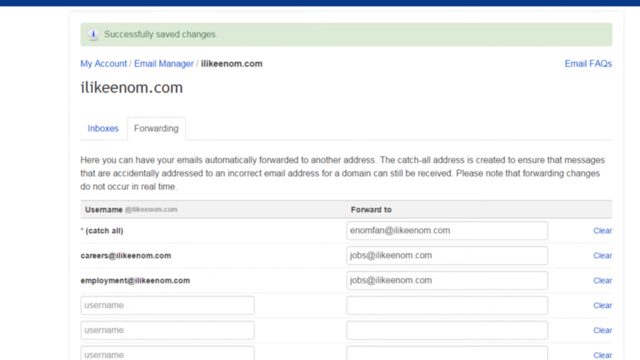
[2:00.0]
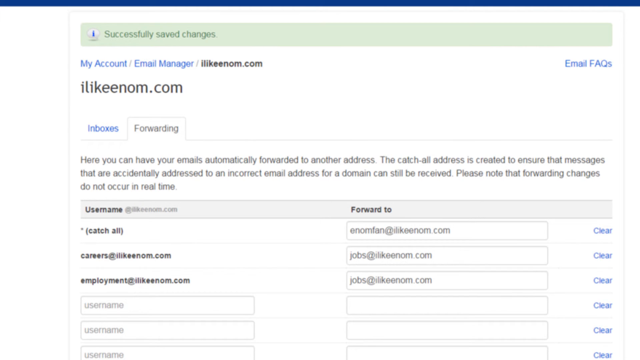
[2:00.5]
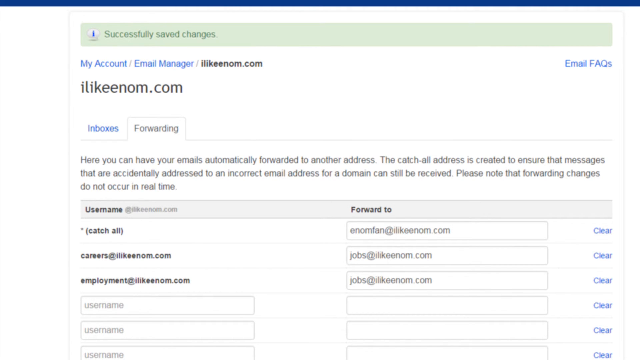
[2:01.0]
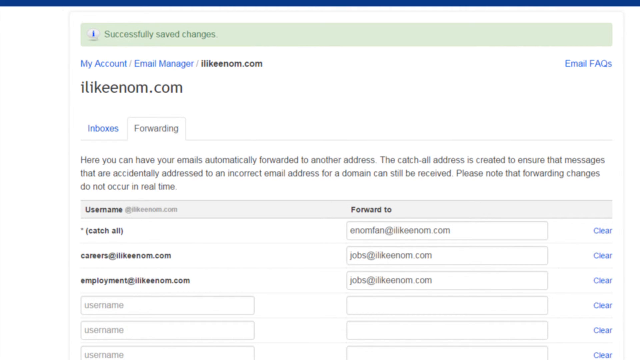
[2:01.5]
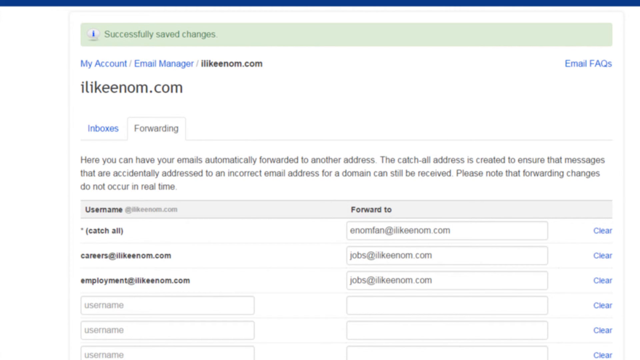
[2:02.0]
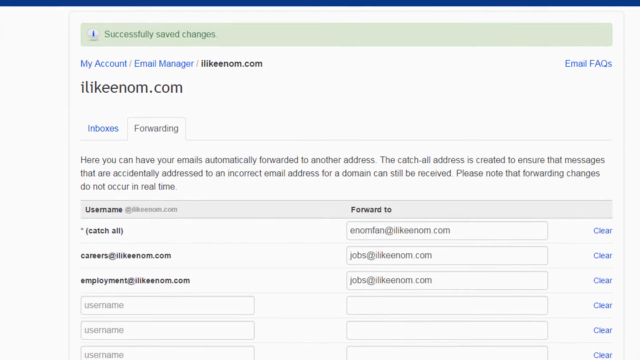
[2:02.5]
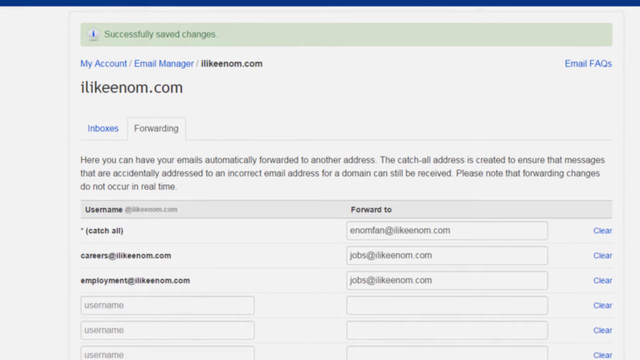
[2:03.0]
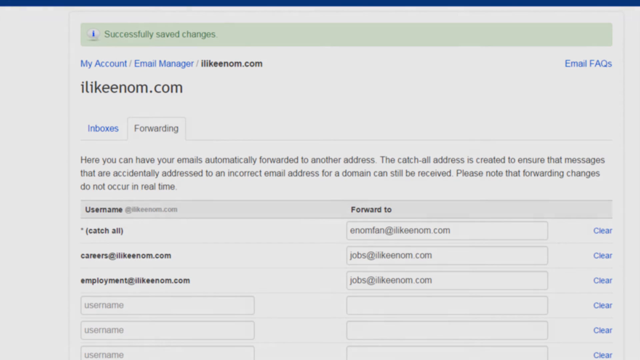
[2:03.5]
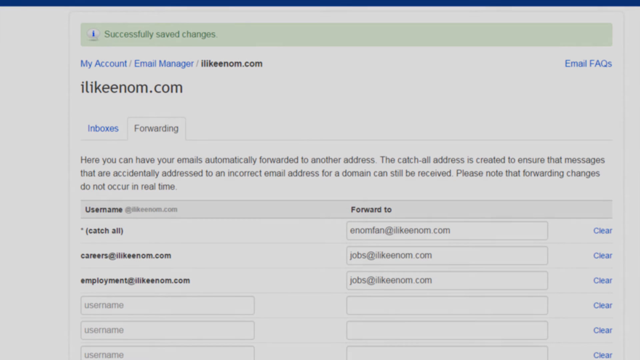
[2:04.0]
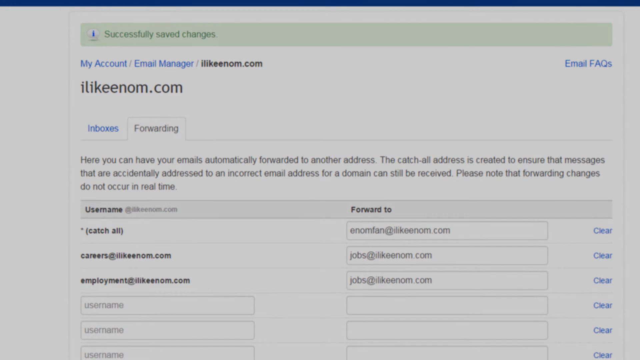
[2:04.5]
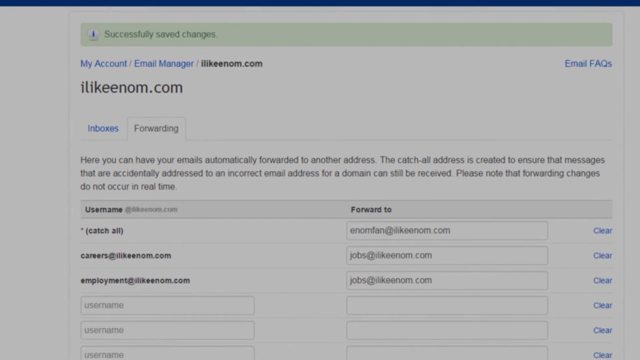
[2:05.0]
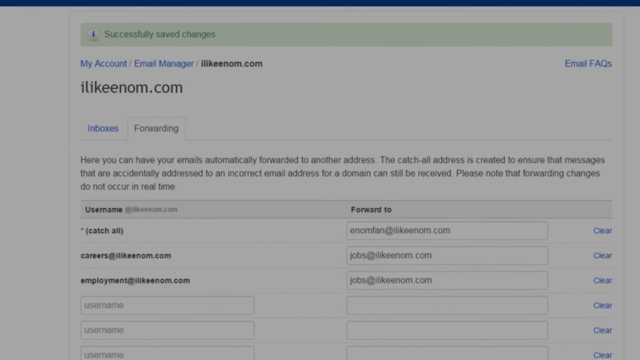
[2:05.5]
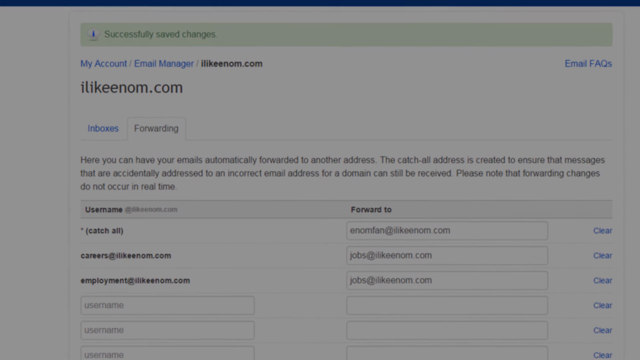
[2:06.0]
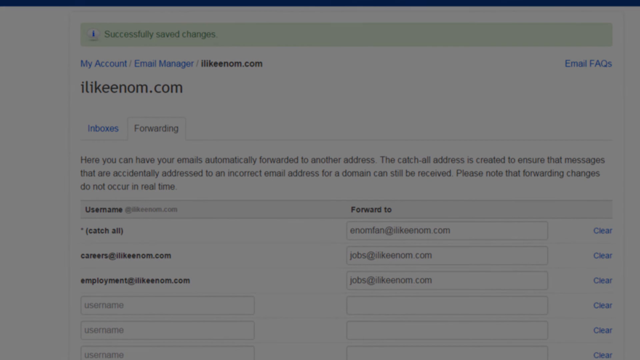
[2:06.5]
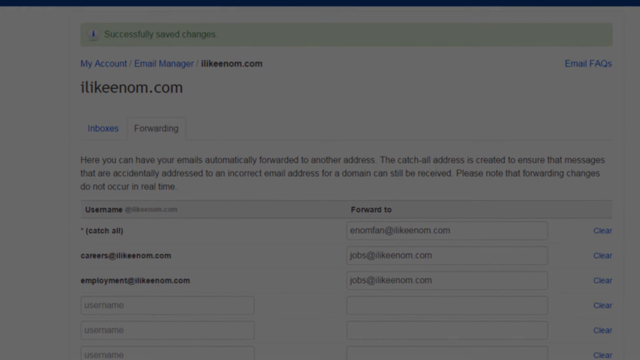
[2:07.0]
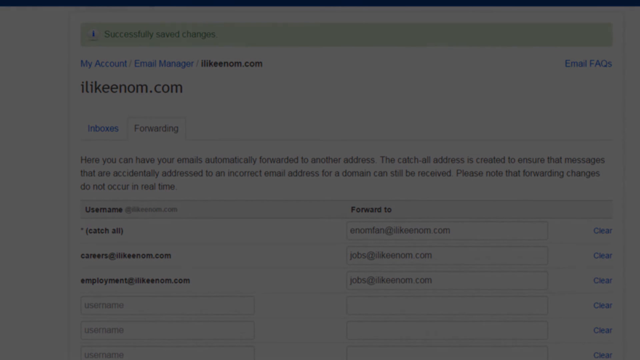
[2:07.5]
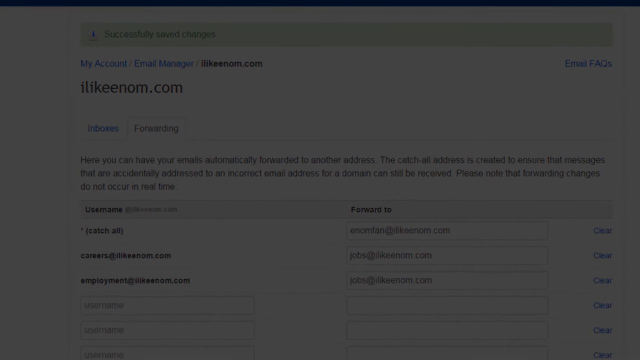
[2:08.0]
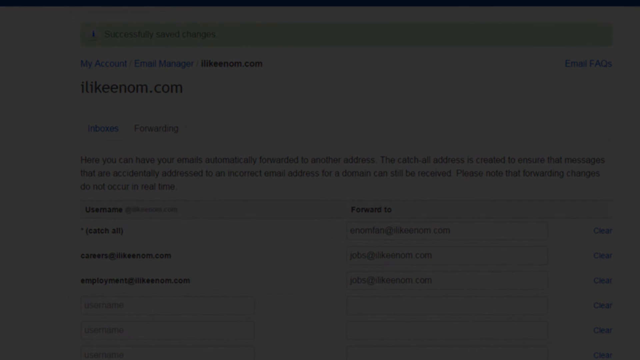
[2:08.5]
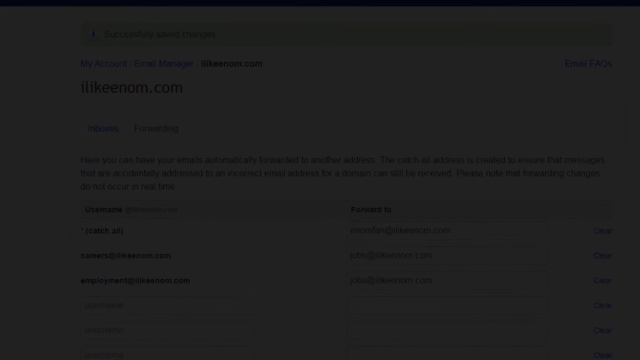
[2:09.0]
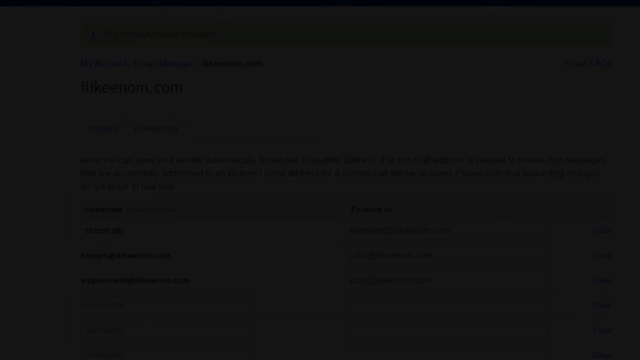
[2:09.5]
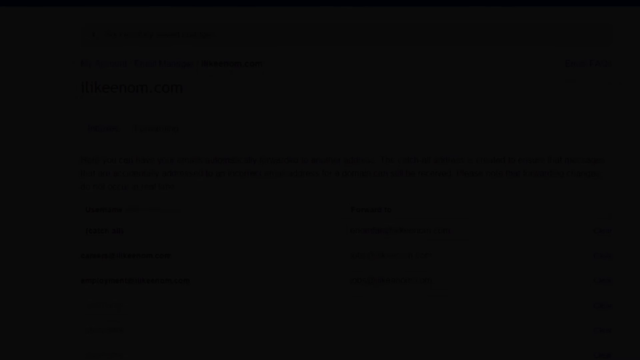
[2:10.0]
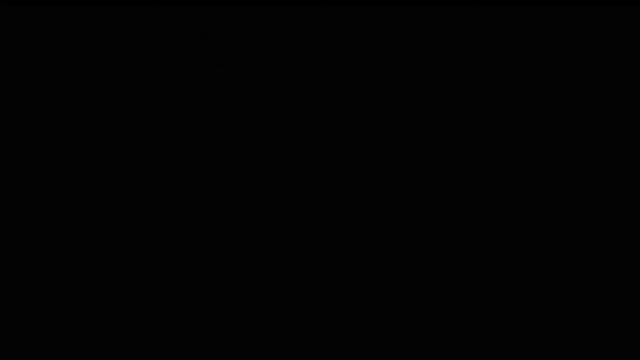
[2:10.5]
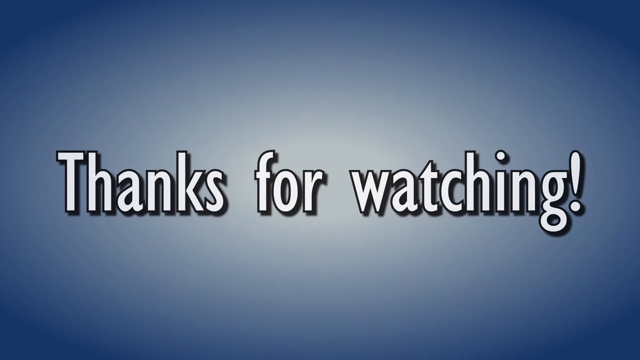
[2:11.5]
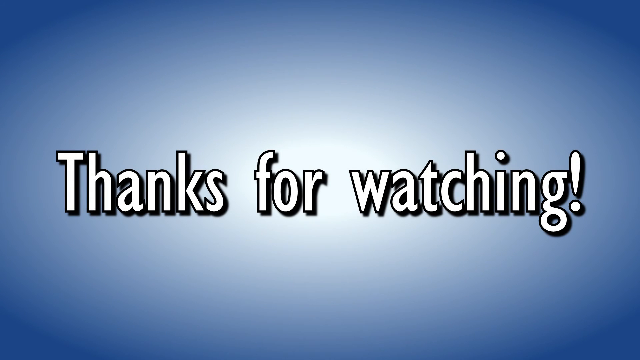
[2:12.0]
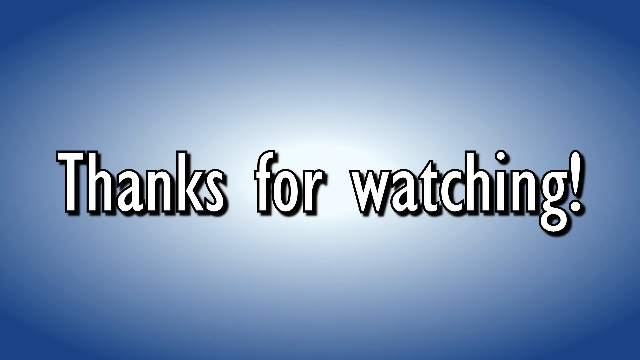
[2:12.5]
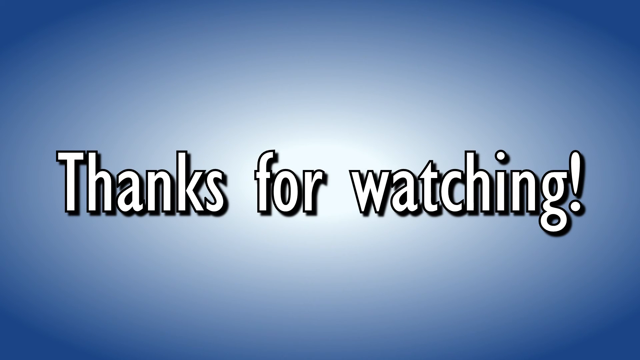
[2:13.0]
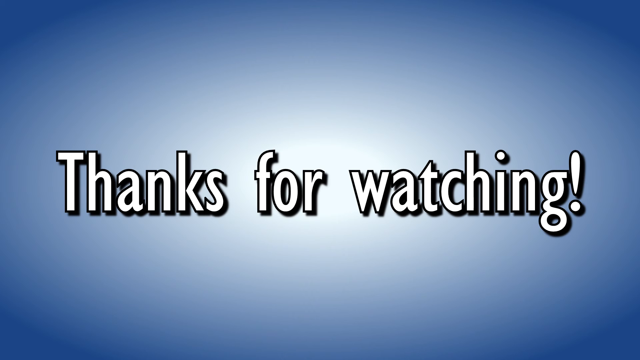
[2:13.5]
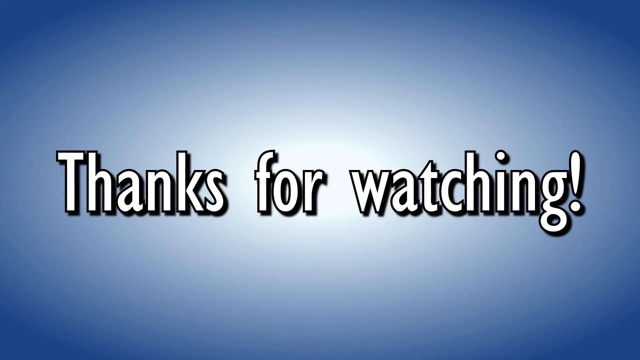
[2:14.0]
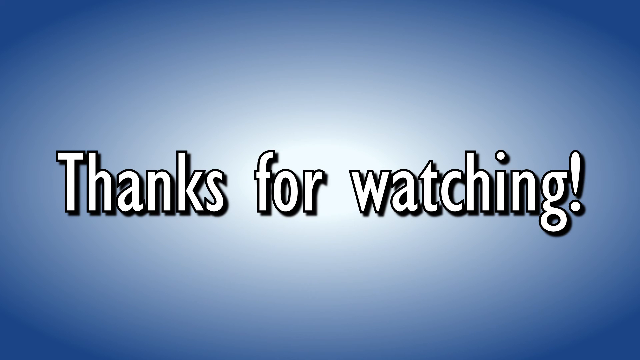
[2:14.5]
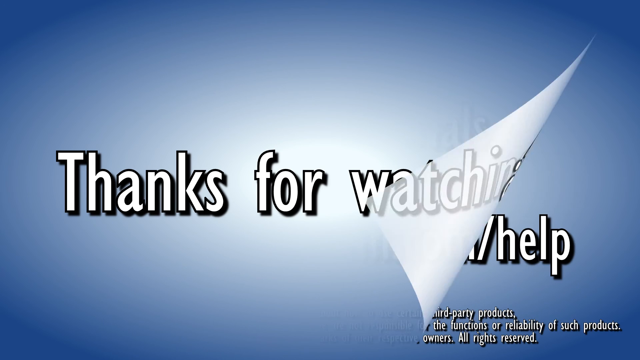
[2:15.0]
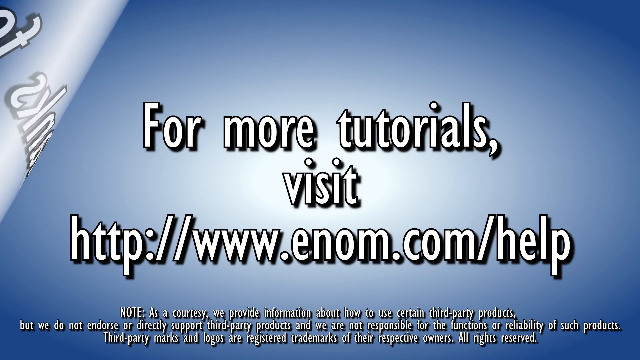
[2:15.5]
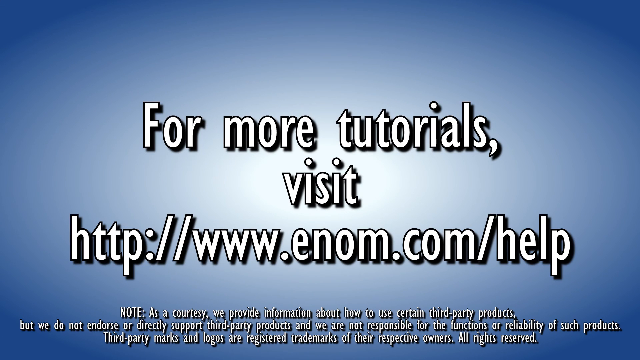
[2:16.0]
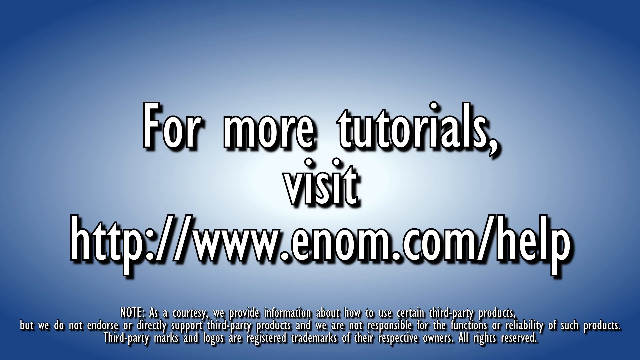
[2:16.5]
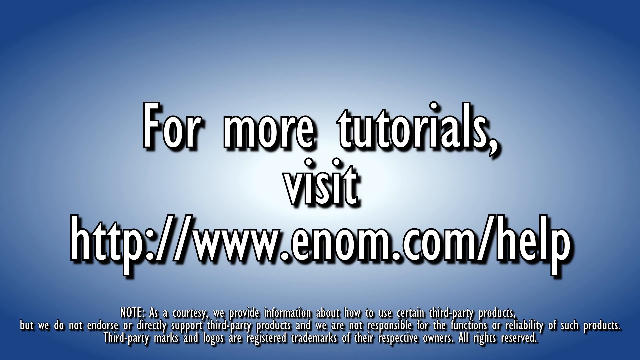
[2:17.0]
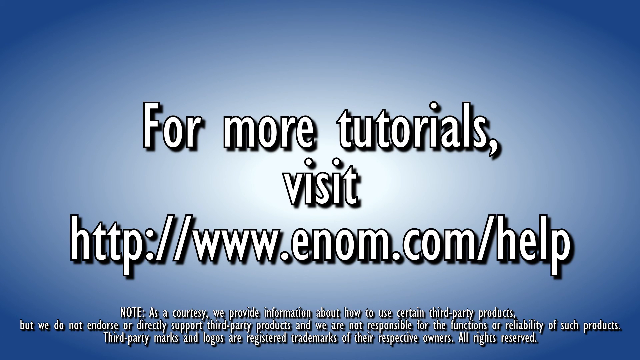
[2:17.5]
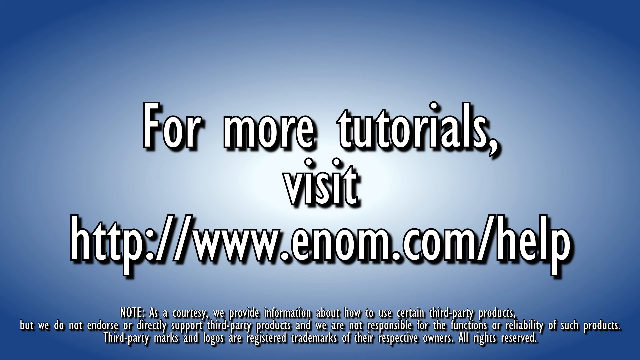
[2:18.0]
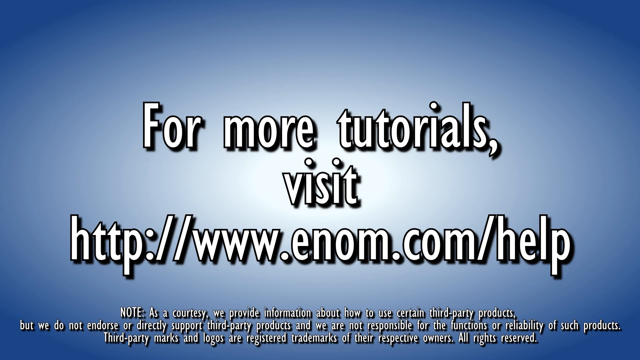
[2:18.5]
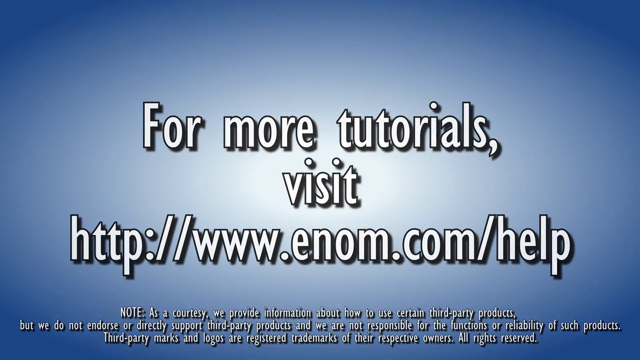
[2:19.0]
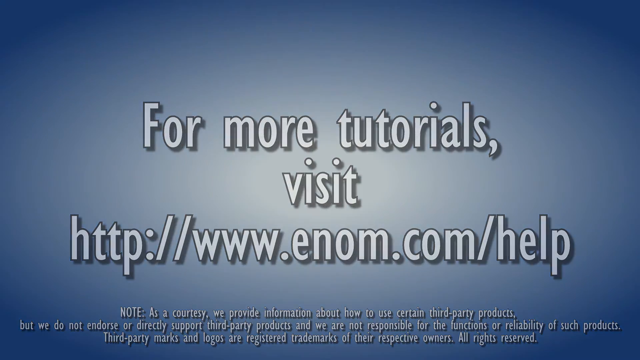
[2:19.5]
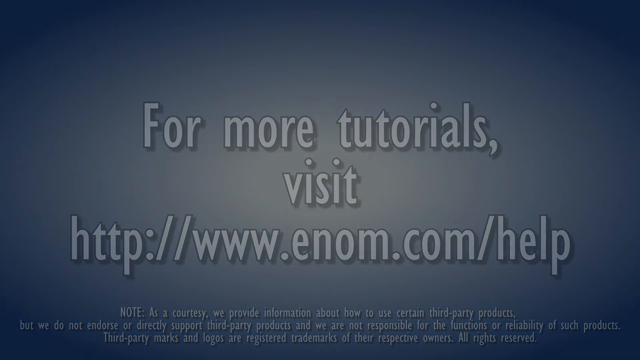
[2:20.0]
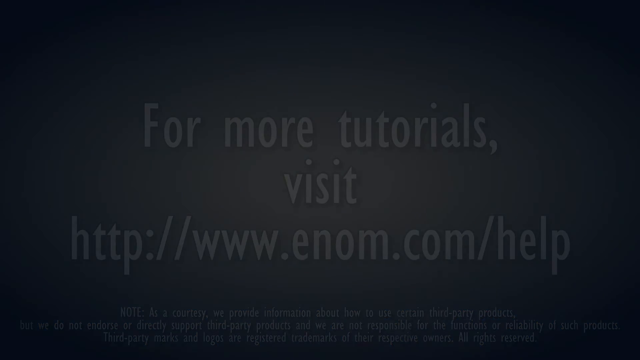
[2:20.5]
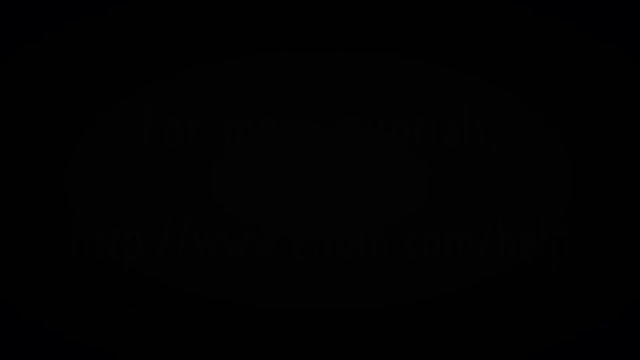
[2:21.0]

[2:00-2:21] Someone is filling out information on a white website screen. At the top are options reading "my account" and "email manager," followed by what looks like a website. Below are tabs, one saying "inboxes" and the other "forwarding," and beneath them the labels "Username" and "Forward to" with boxes that look fillable. At the top of the screen, a green label says "Successfully Saved Changes." The screen then goes black and fades out, and a blue background with a light in the middle pops up with the words "thank you for watching."